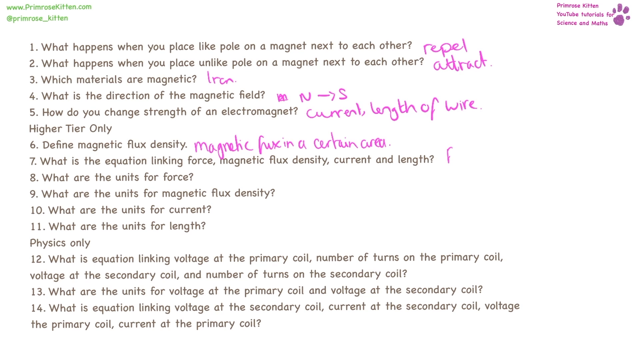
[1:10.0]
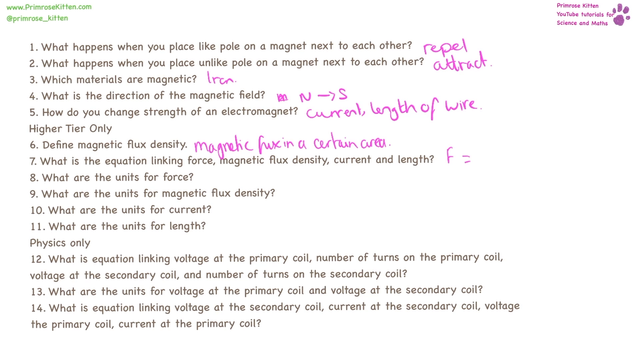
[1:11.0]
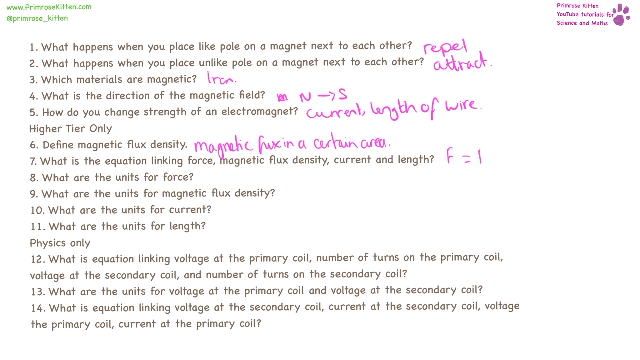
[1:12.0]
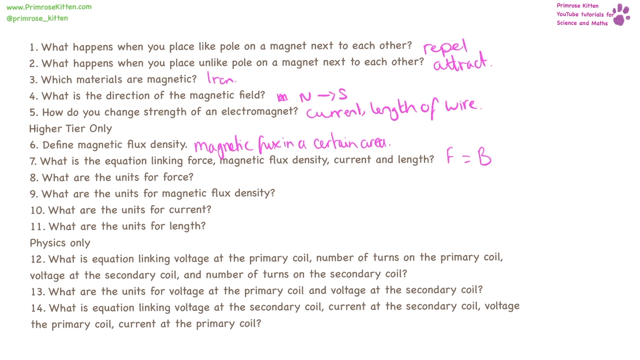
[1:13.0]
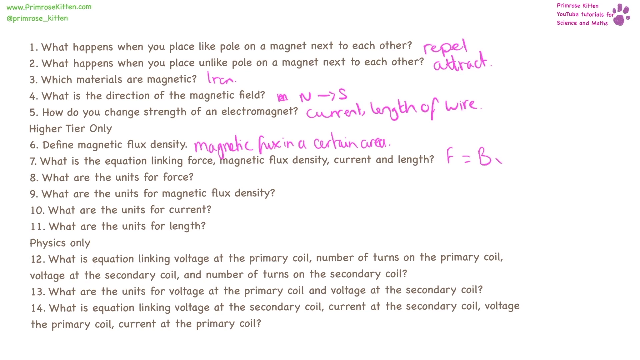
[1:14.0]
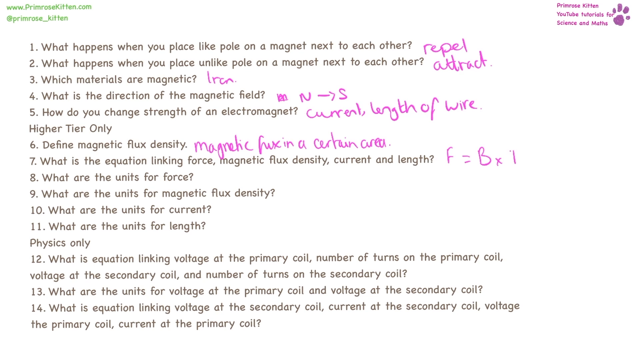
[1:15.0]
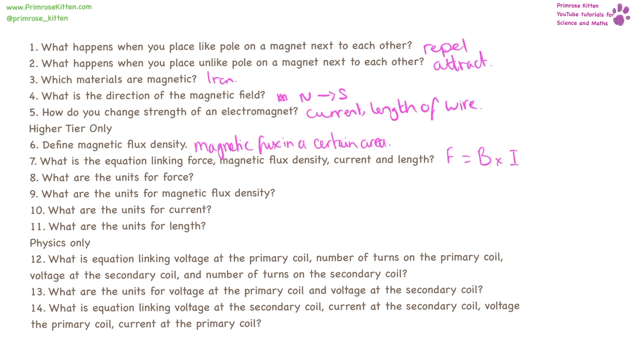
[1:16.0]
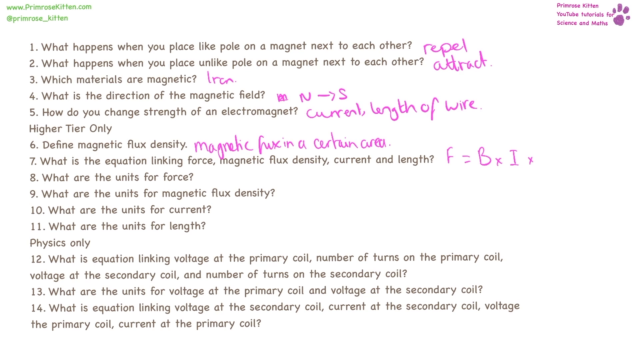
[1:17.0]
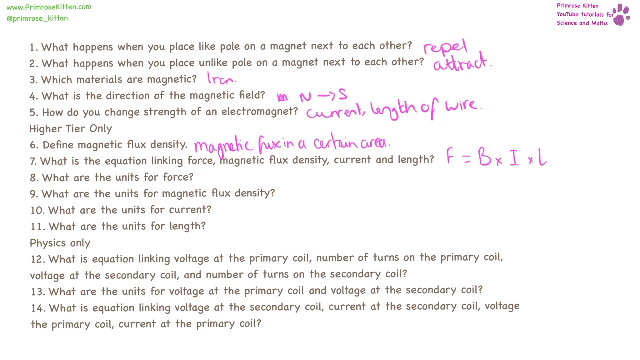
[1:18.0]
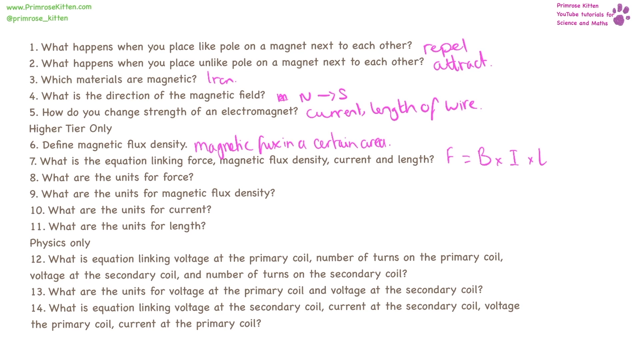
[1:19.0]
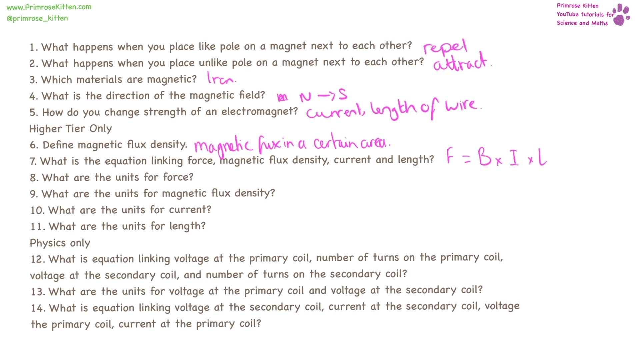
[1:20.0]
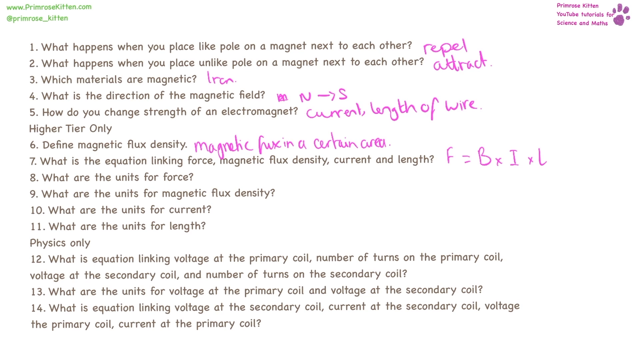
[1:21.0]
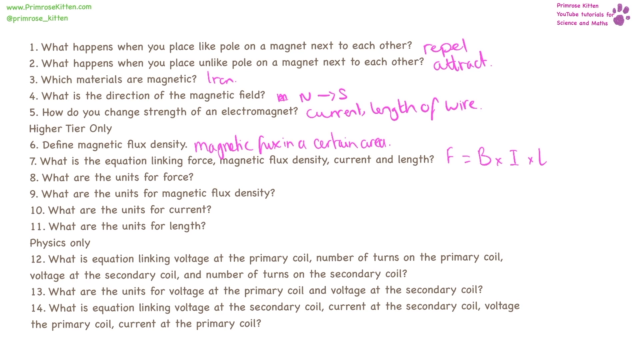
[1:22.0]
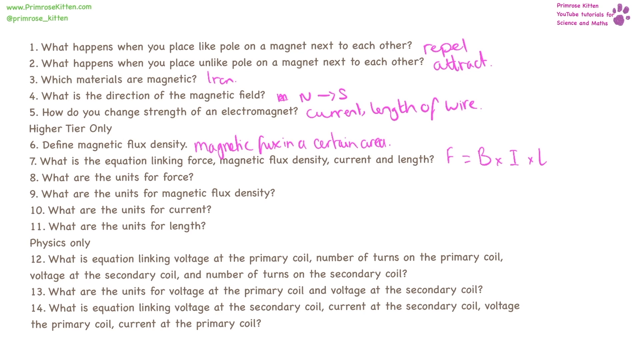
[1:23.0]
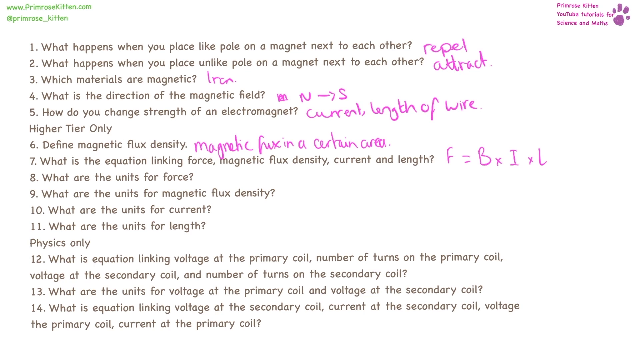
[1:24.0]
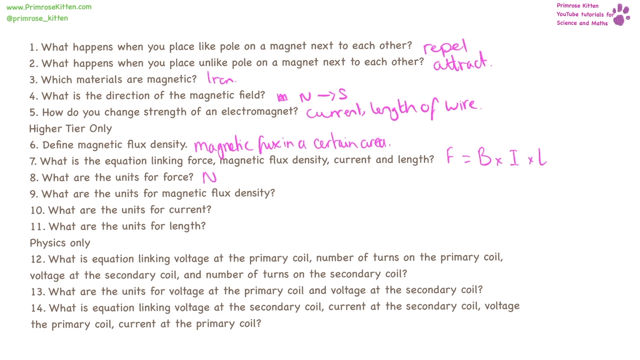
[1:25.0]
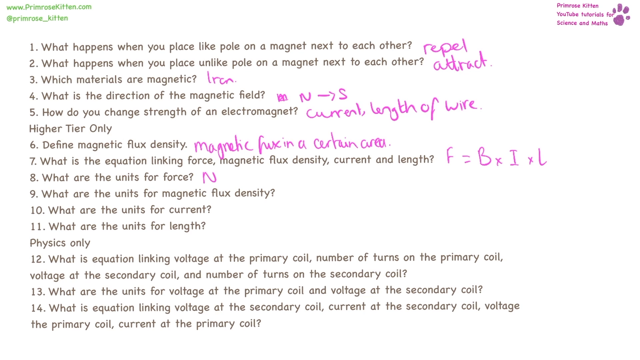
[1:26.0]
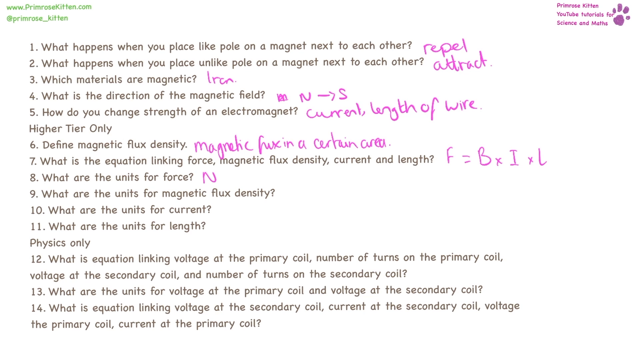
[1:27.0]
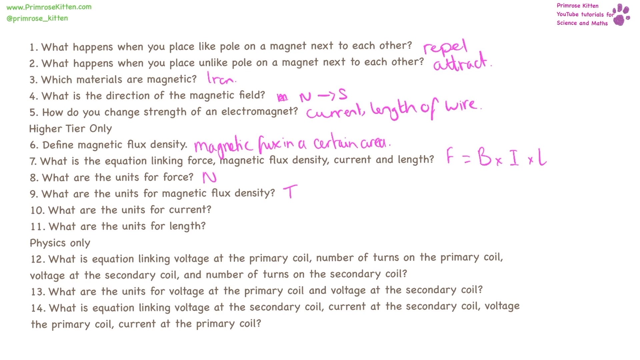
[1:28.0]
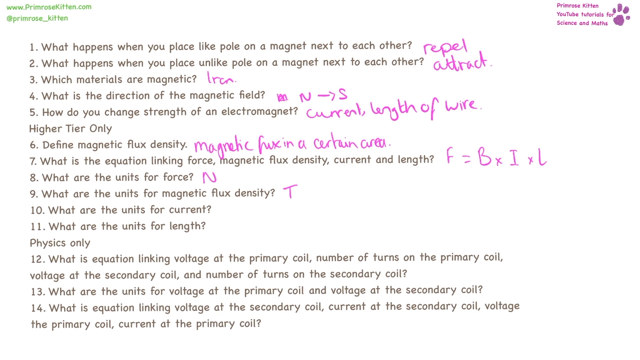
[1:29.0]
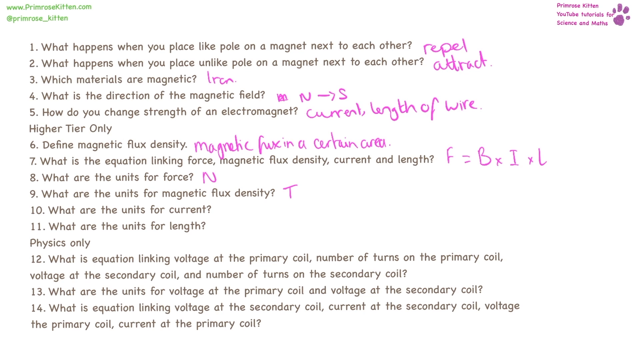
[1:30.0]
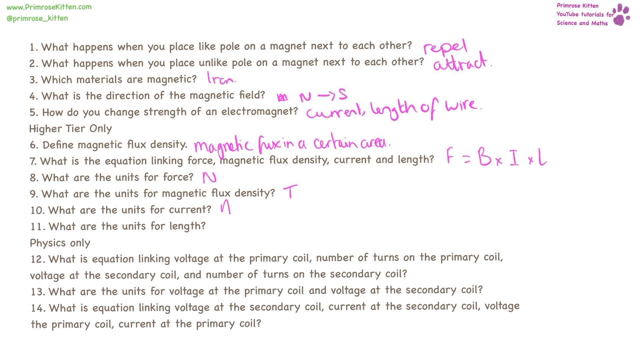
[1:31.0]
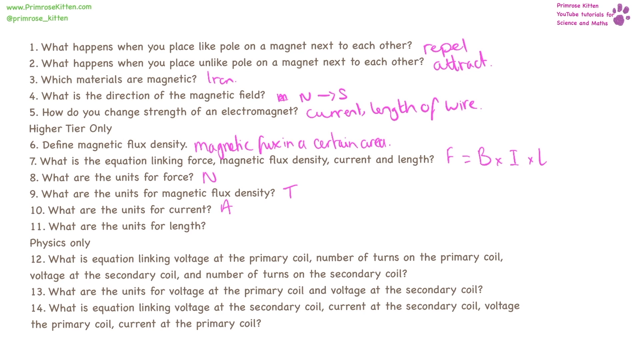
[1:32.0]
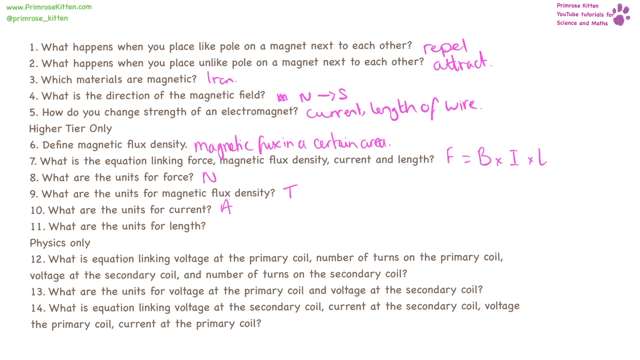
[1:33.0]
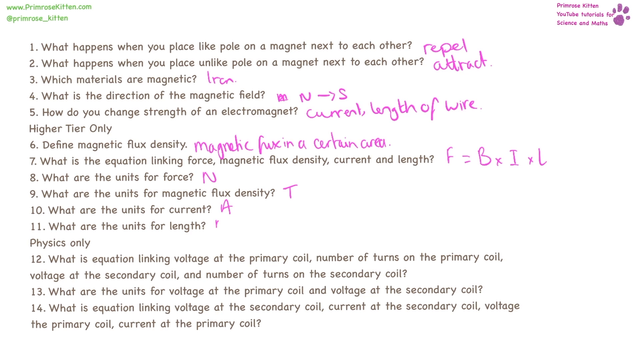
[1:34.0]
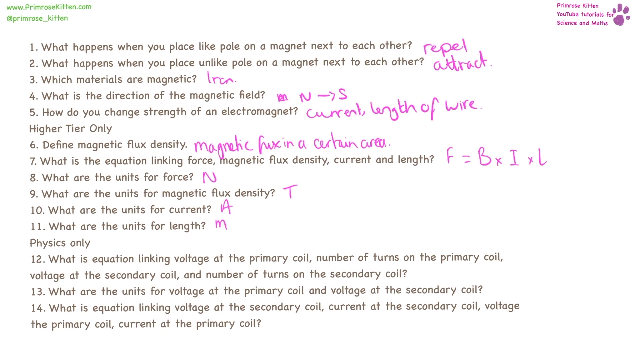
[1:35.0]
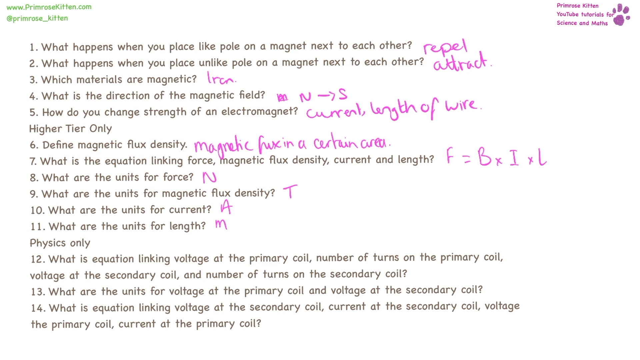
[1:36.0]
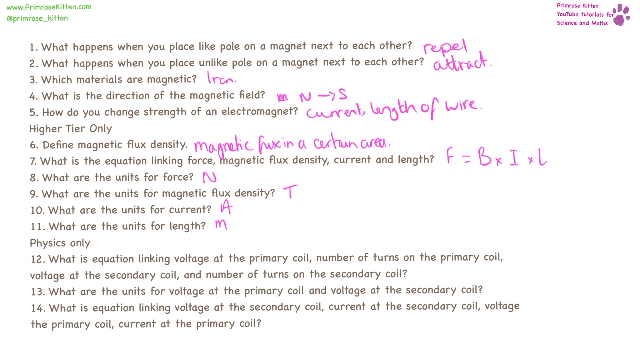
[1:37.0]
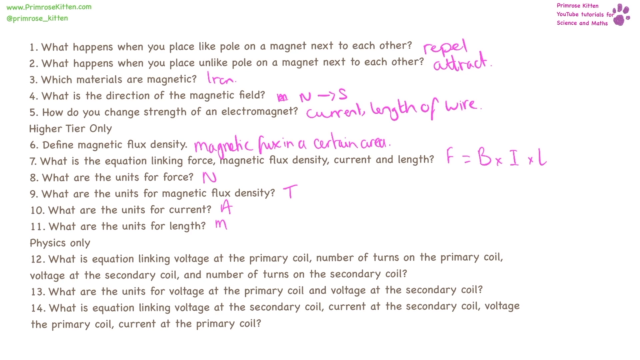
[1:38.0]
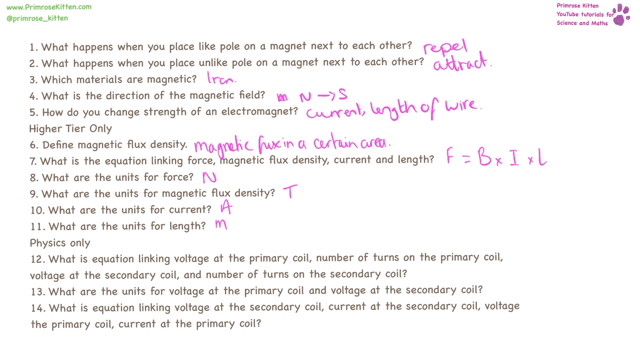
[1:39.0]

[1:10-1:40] A screen shows 14 one-line questions about magnets typed on a white background. The top left corner has "www.primrosekitten.com" and "@primrose_kitten", along with "Primrose Kitten YouTube Tutorial for Science and Math" and a red cat paw logo, with the questions listed below. Answers seem to be written at the end of each question in thin red pen strokes. Answers up to question 6 are already written, and the higher tier questions, 6 to 11, are being answered. For question 7, "What is the equation linking force, magnetic flux density, current and length?", the answer "F=B*I*l" is written. Questions 8 to 11 ask for the units of force, magnetic flux density, current and length, and the answers "N", "T", "A" and "m" are written at the end of each, one by one.